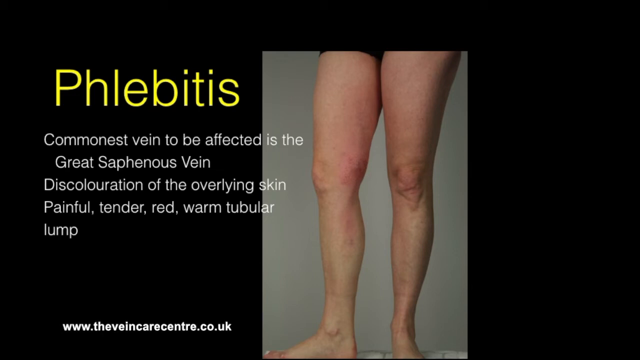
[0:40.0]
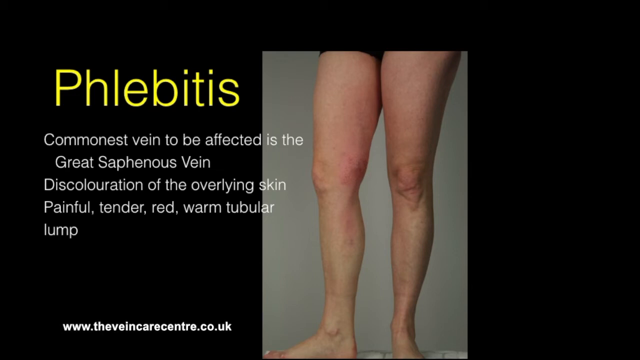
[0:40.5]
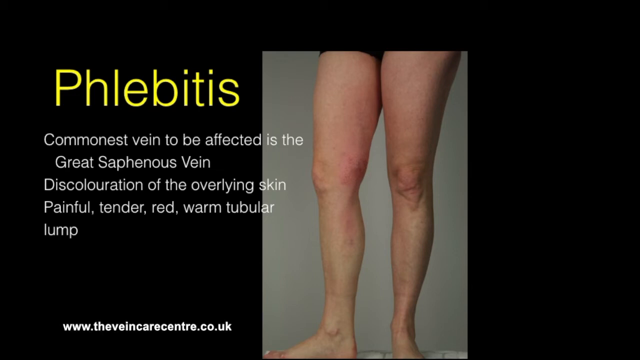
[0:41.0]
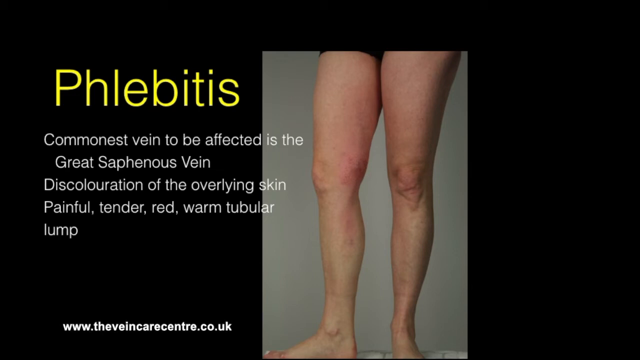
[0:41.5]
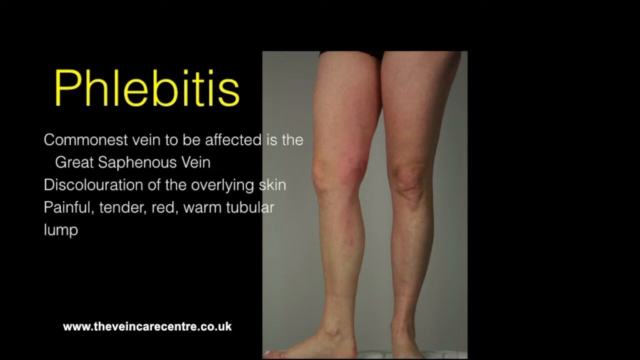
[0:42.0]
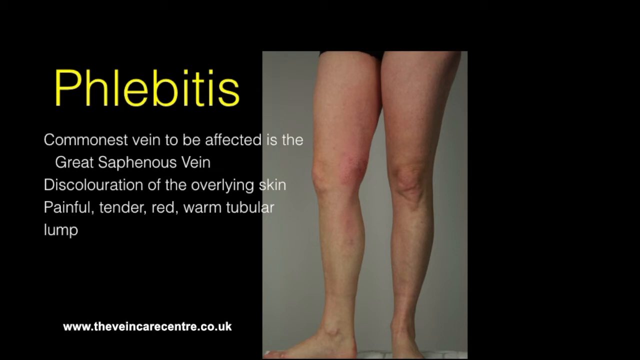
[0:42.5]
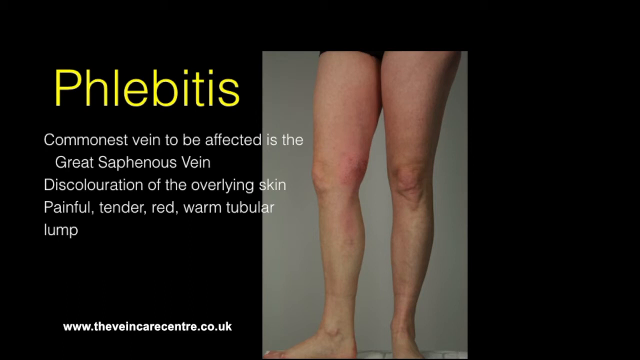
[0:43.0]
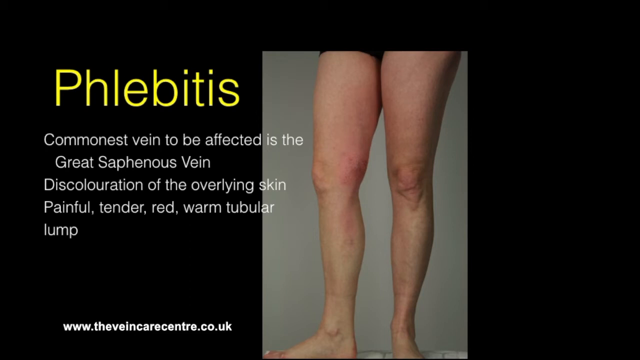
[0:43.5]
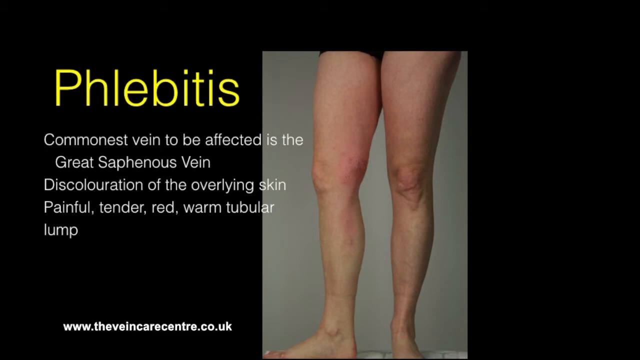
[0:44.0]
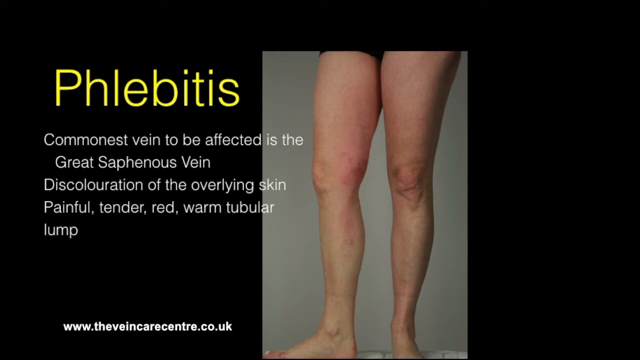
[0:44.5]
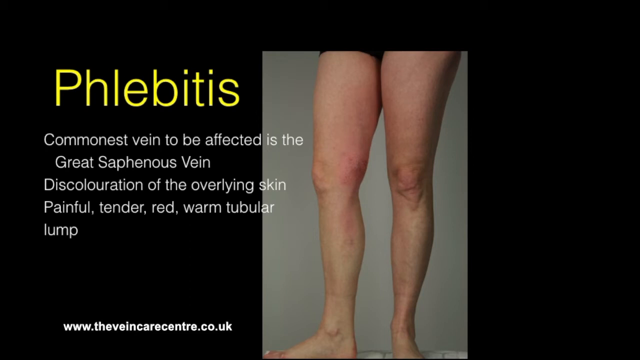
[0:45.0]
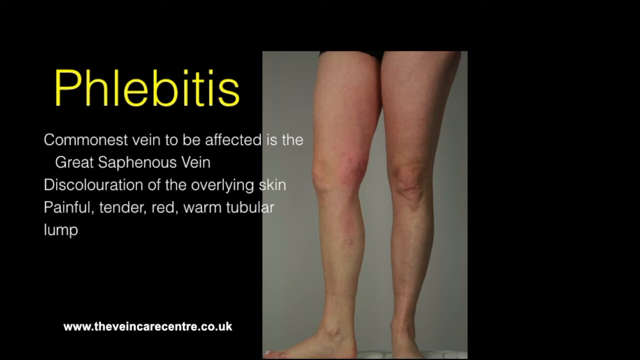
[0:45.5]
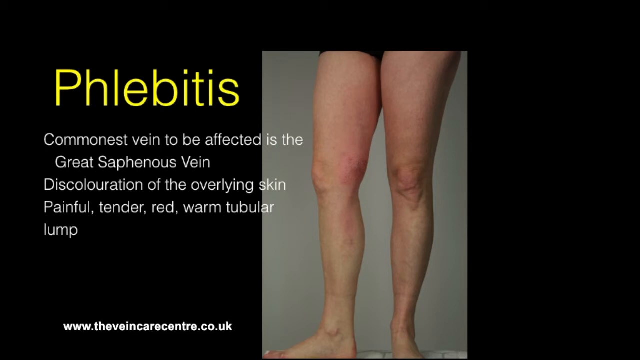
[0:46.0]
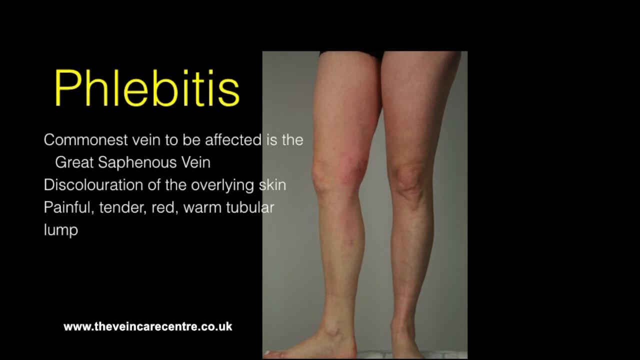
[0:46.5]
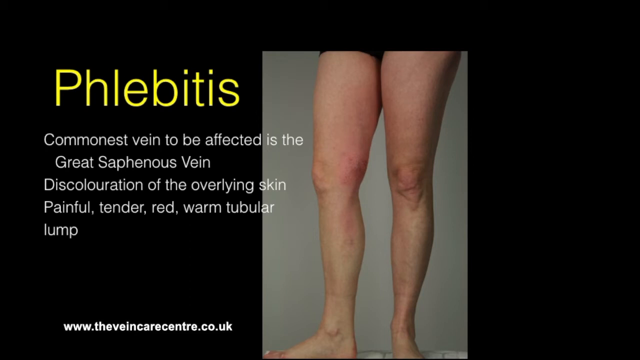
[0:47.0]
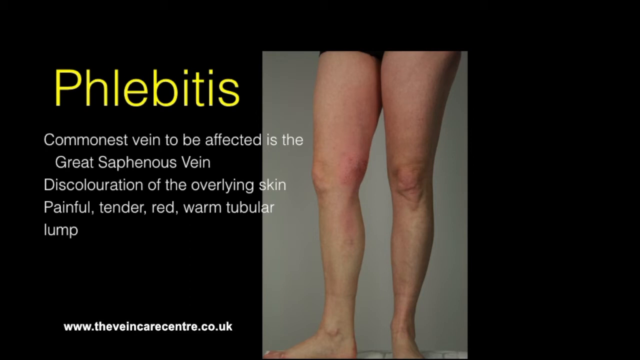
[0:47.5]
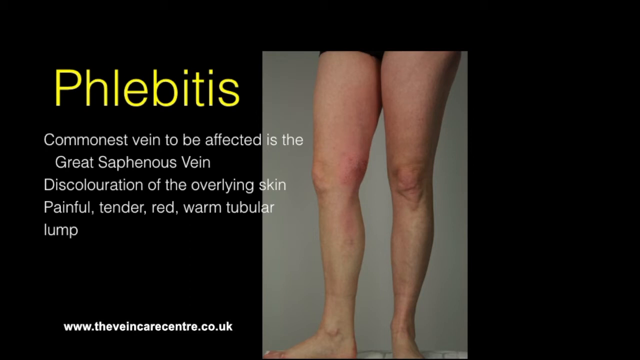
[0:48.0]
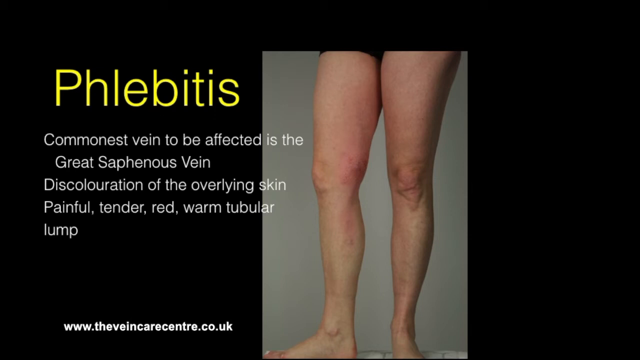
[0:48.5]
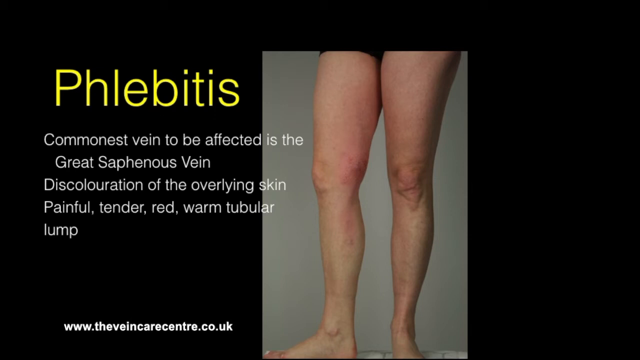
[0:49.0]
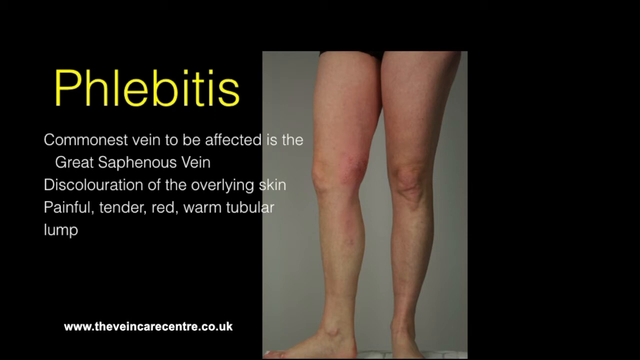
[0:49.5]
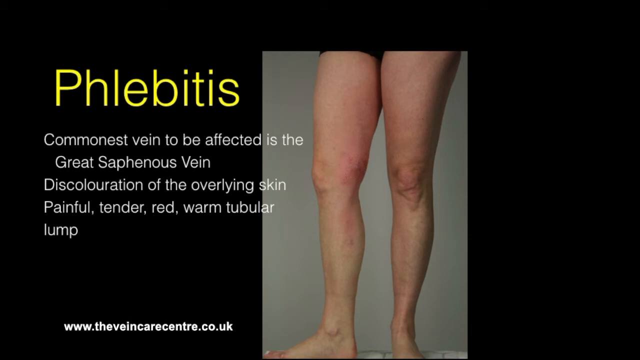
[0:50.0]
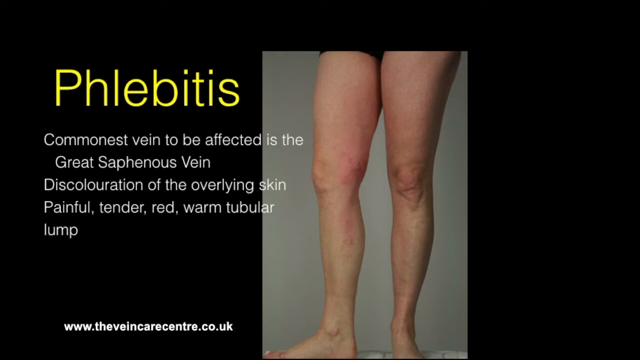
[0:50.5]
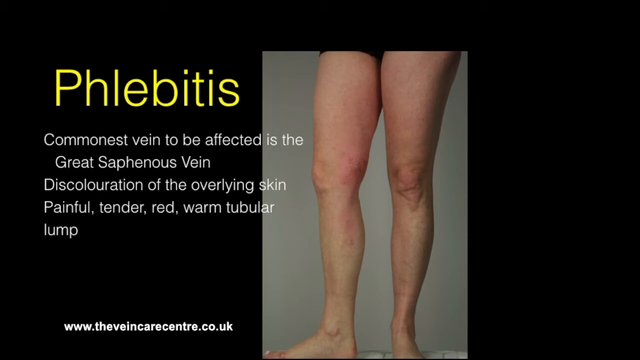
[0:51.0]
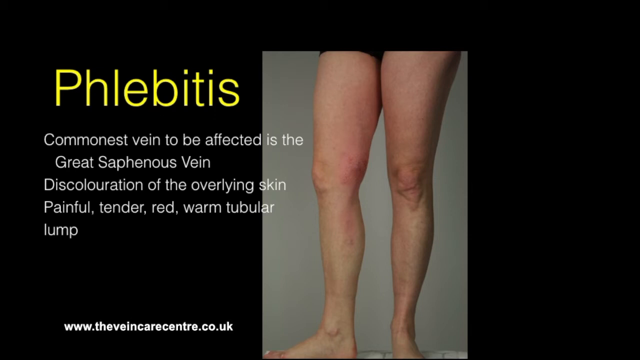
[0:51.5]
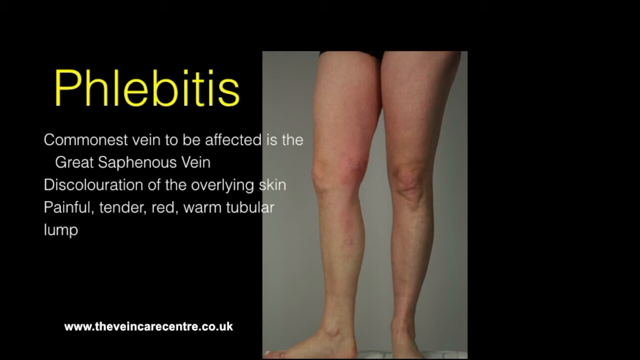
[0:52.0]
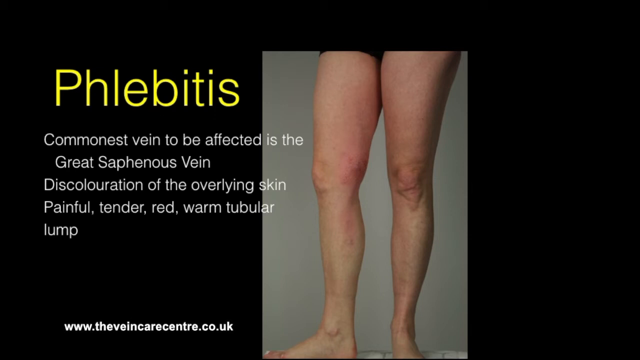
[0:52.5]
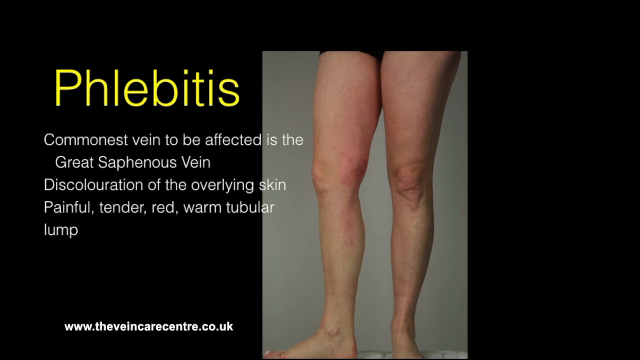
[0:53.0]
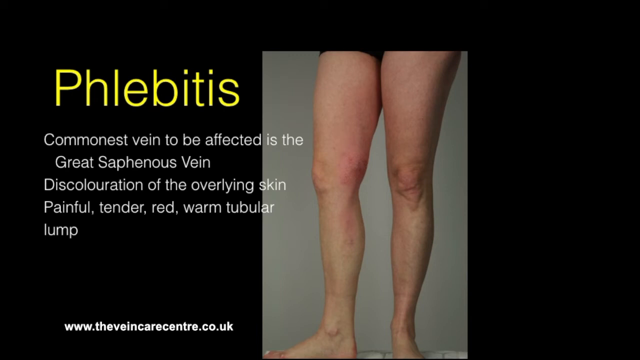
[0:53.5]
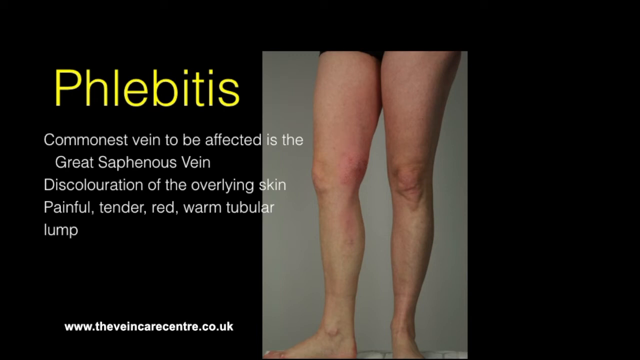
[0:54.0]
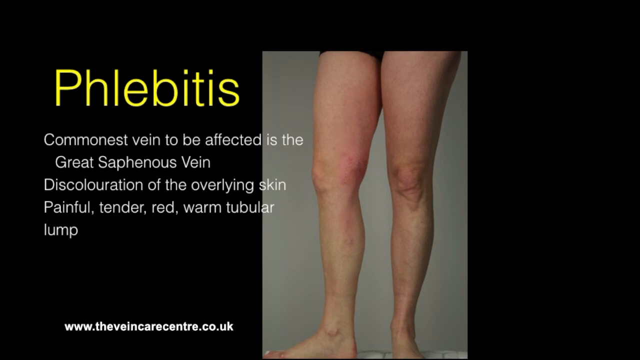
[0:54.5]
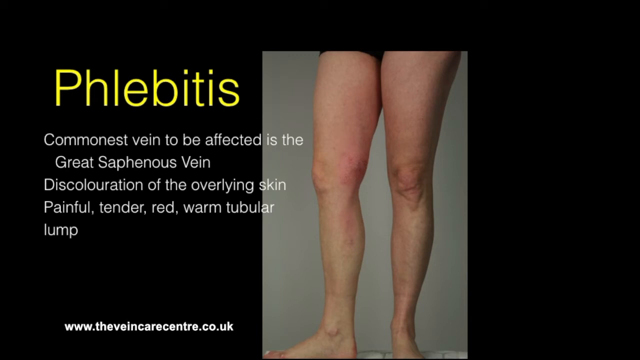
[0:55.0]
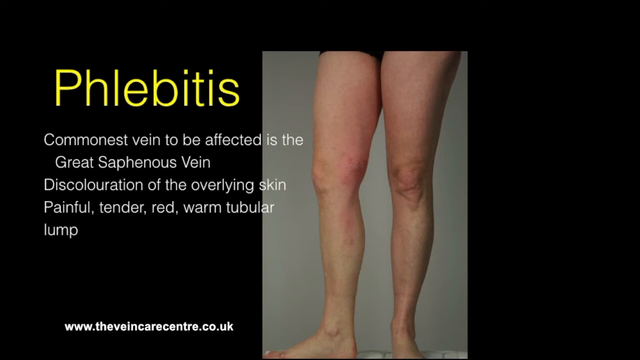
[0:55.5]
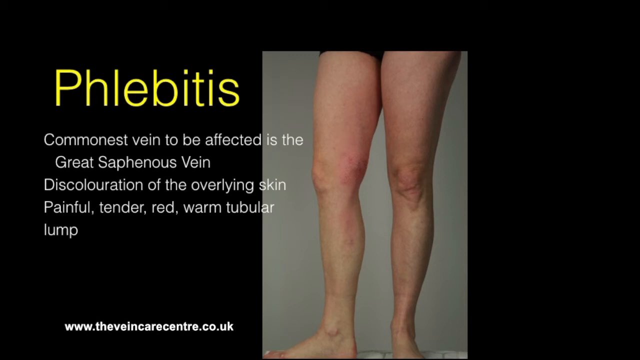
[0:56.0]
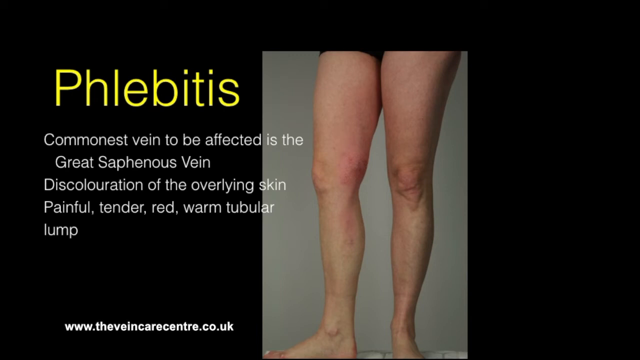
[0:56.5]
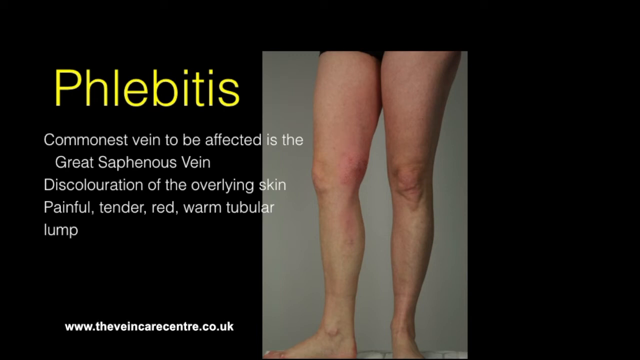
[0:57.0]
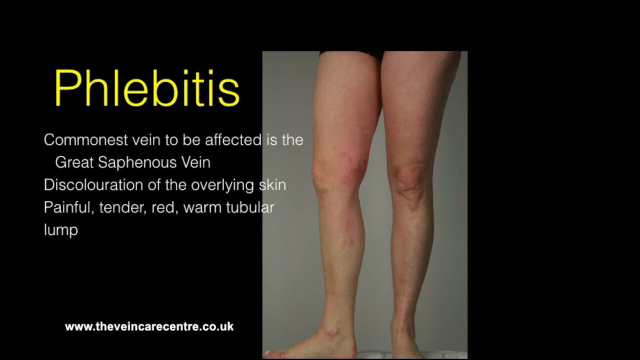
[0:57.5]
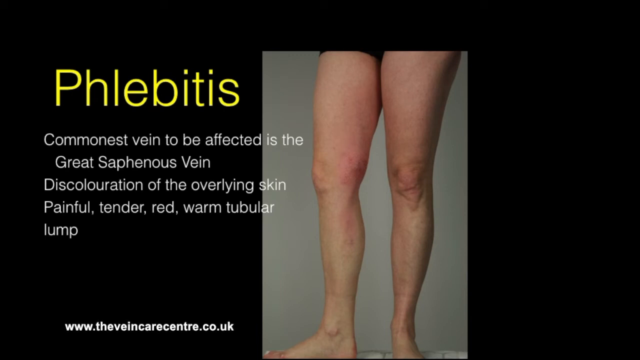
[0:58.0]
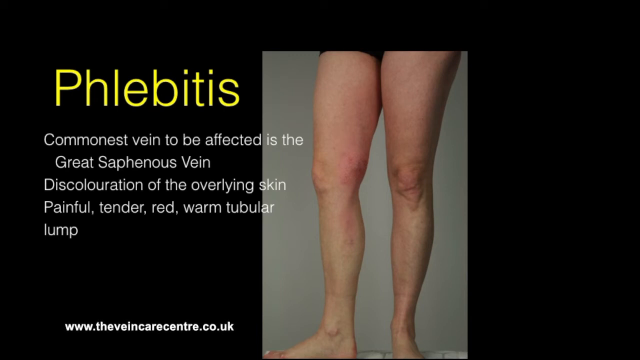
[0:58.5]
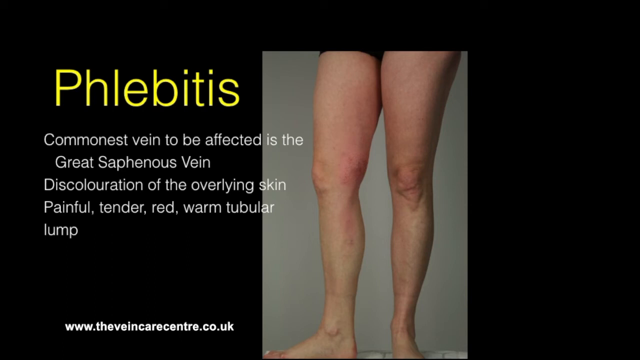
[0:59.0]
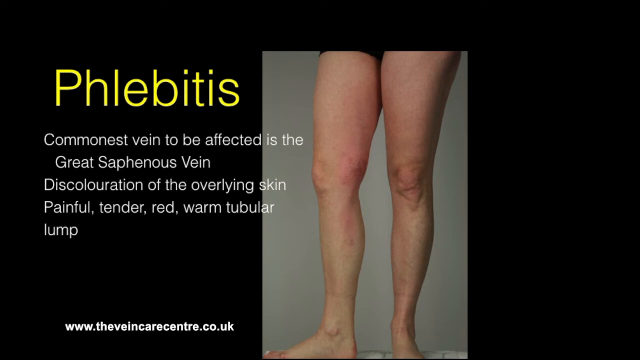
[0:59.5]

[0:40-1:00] On a black background, the word "phlebitis" is in yellow above a picture of legs, followed by white text that apparently explains what it is: "commonest vein to be affected is the great saphenous vein, discoloration of the overlying skin, painful, tender, red, warm, tubular lump." The screen stays on this picture and description for a while without moving. At the bottom of the screen it reads "www.theveincenter.co.uk".